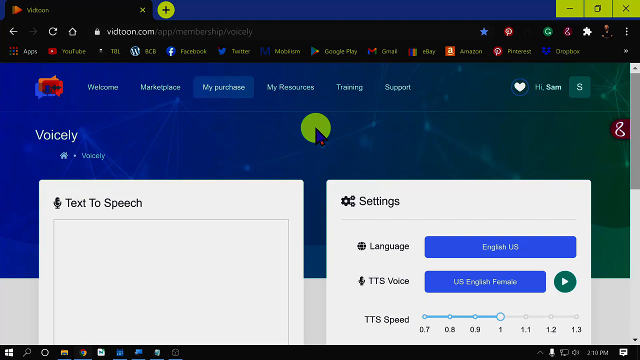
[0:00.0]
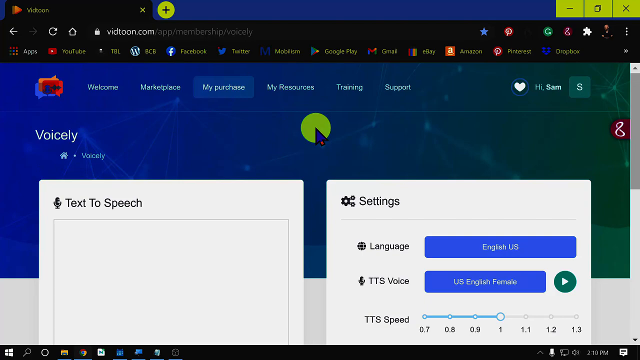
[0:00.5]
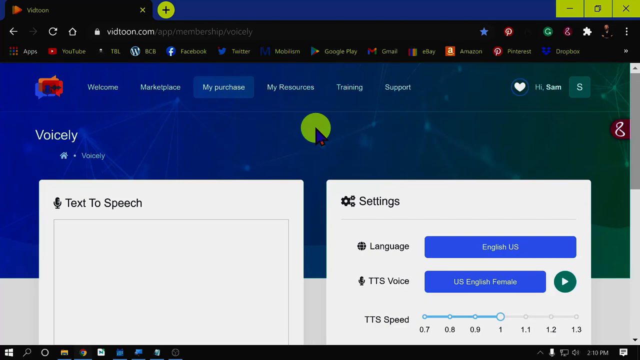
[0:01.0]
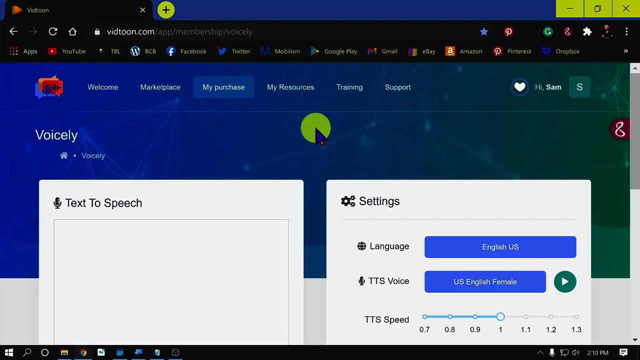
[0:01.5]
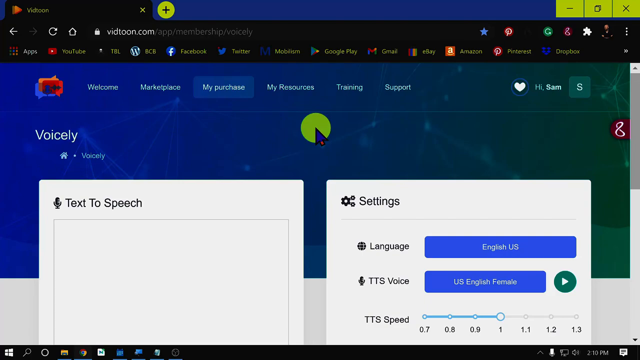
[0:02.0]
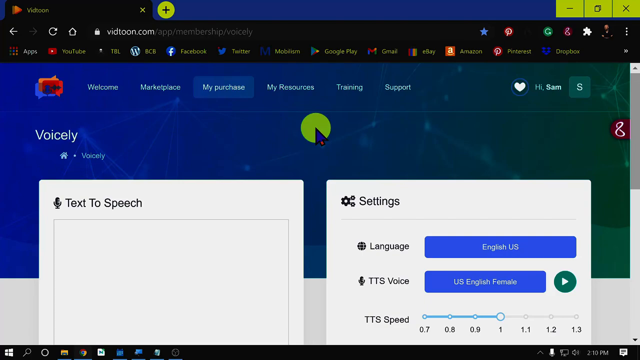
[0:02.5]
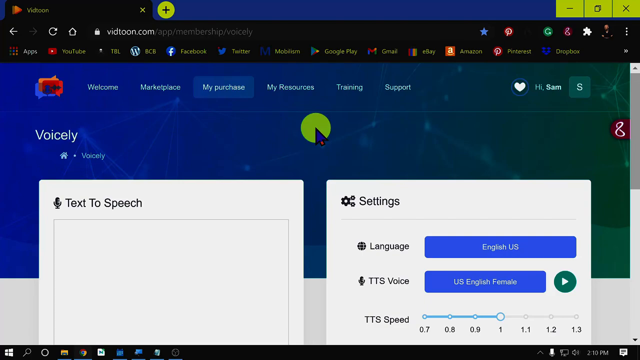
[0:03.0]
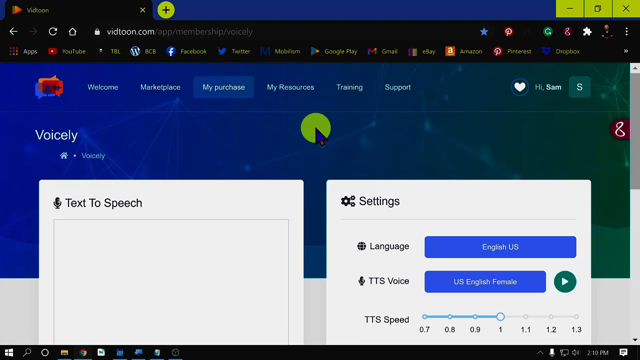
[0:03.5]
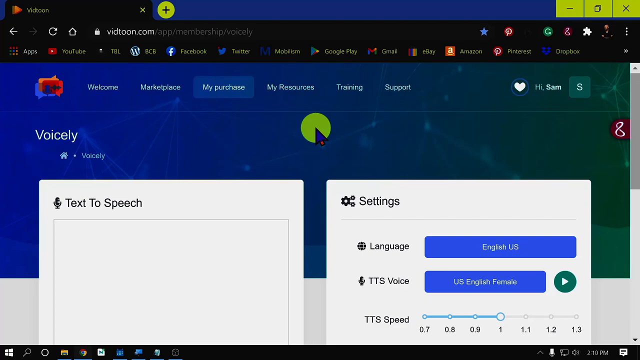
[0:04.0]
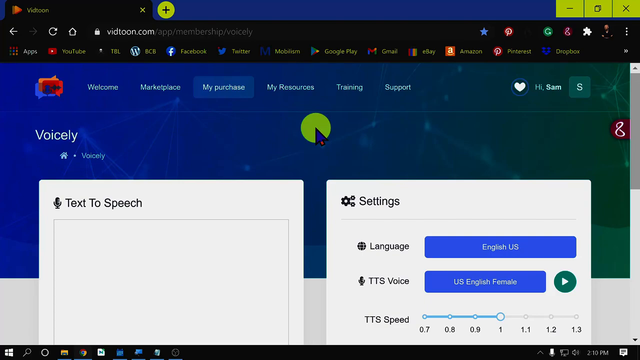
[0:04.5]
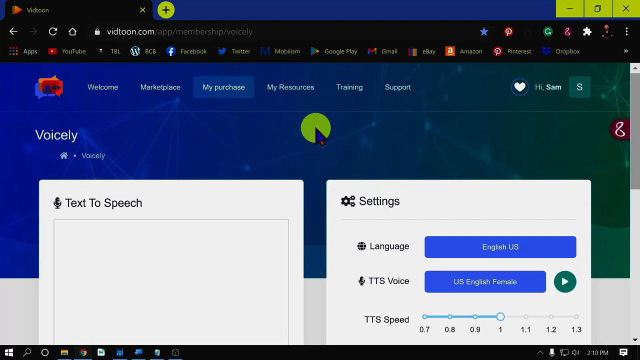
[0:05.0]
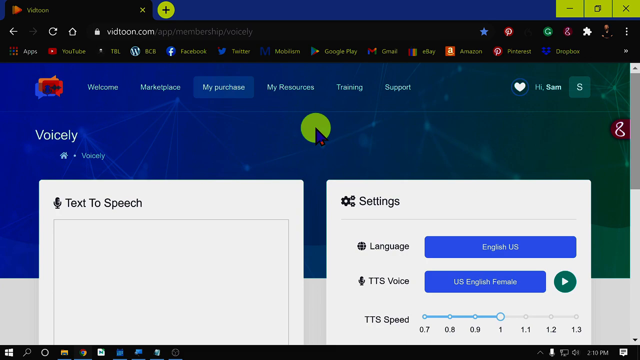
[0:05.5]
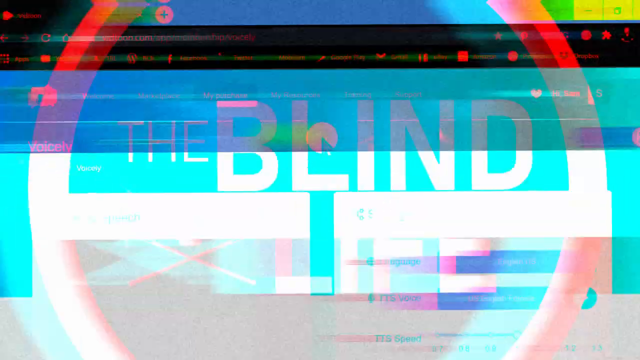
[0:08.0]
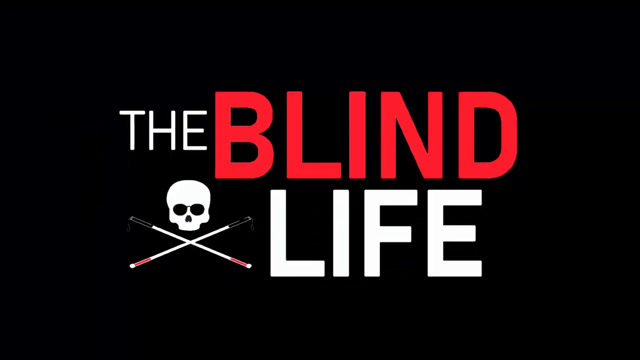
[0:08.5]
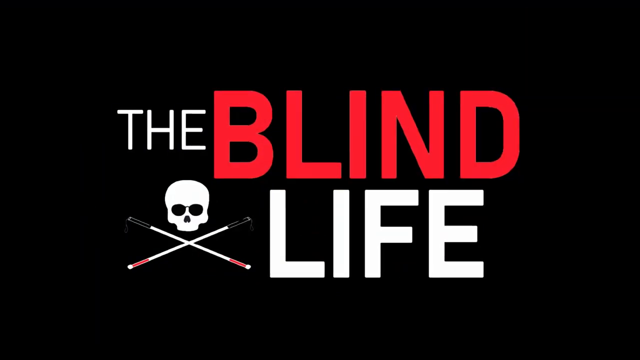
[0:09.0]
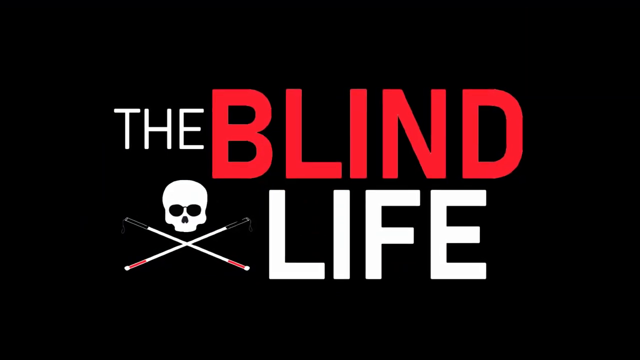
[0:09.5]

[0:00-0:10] The video opens on a screenshot of a website whose URL is vidtoon.com. The page is an app called Voicely, a text-to-speech generator. Across the top is a toolbar with several options: Welcome, Marketplace, My Purchase, My Resources, Training and Support. A user called Sam is logged in. On the right-hand side of the screen are settings: Language, set to English US; TTS Voice, set to US English Female; and TTS Speed. The still image animates into a title page reading "The Blind Life". "The" and "Life" are in white text, while "Blind" is in large, bold red text. The words sit slightly to the right of frame and slightly to the left of frame. There is a skull with what looks like two white canes crossed underneath it, forming a symbol that looks like a pirate flag. Each cane has one red end and one black end.